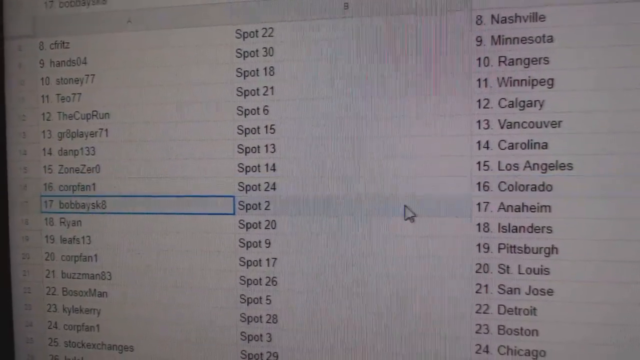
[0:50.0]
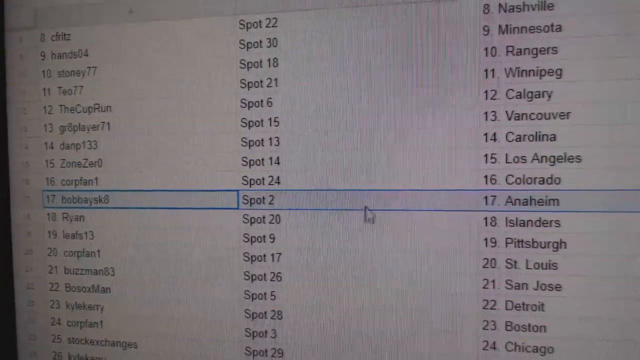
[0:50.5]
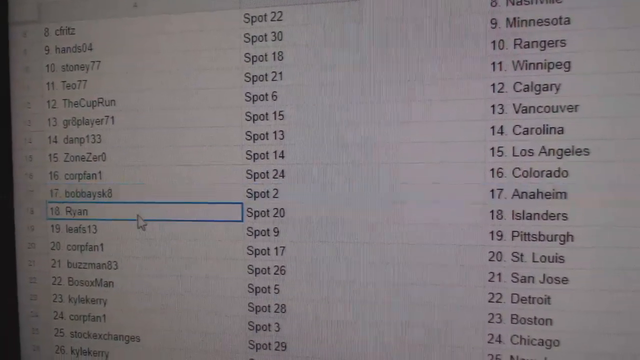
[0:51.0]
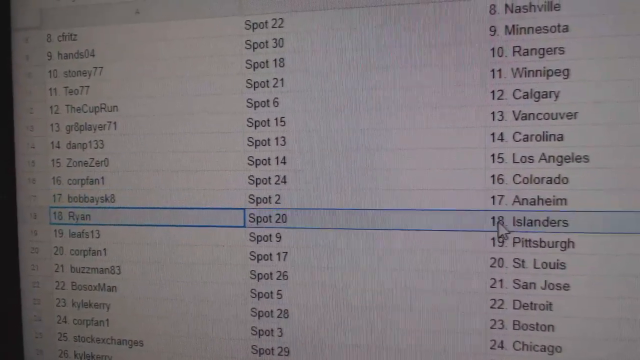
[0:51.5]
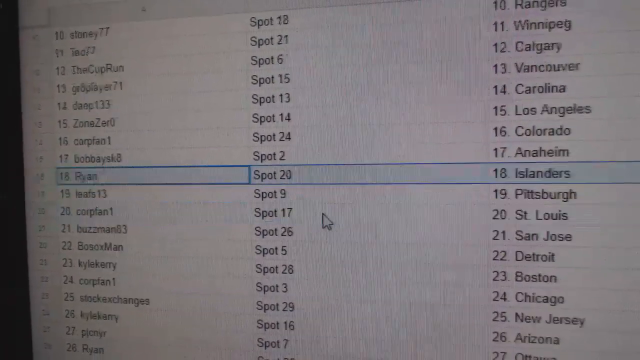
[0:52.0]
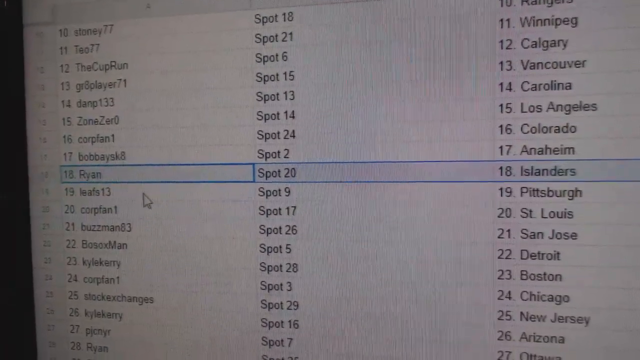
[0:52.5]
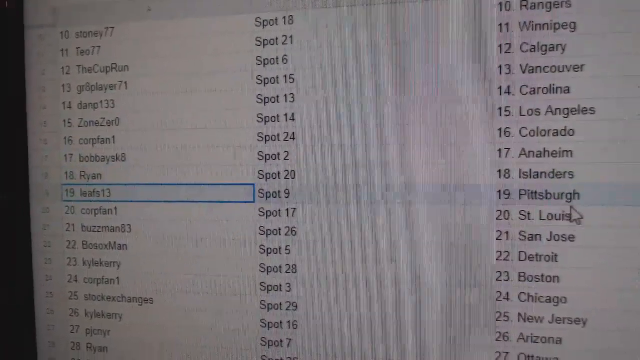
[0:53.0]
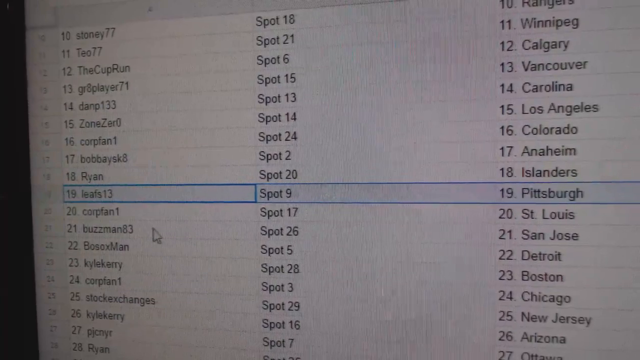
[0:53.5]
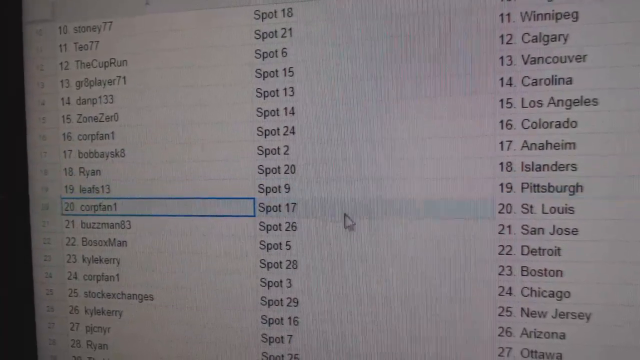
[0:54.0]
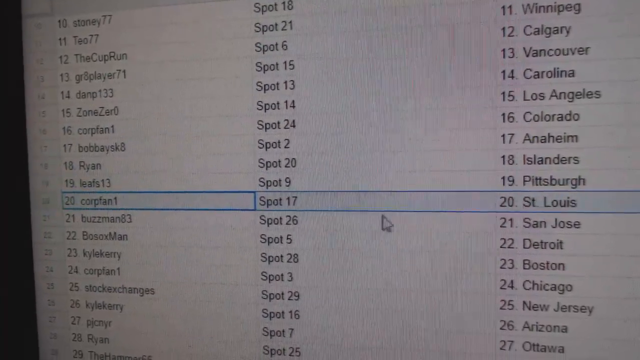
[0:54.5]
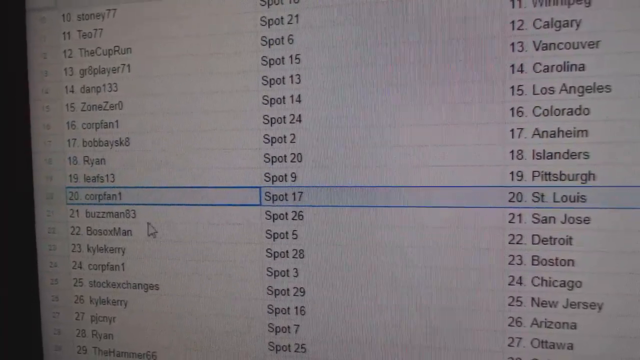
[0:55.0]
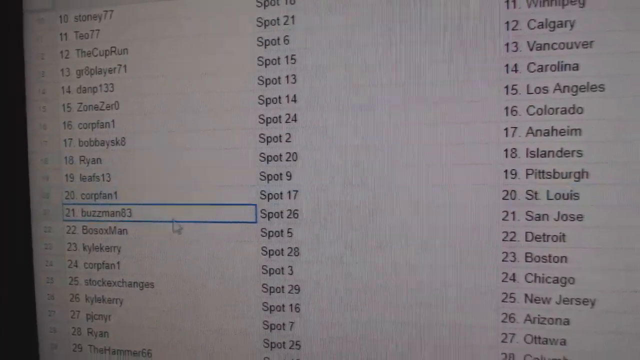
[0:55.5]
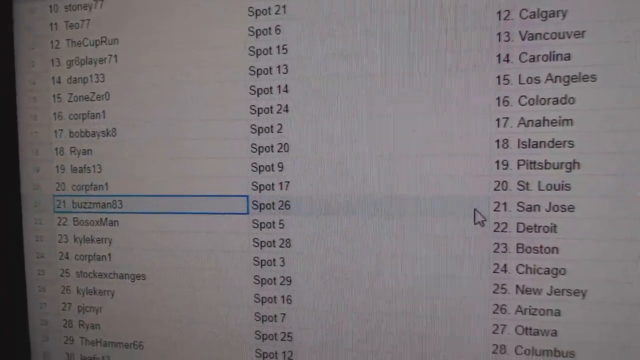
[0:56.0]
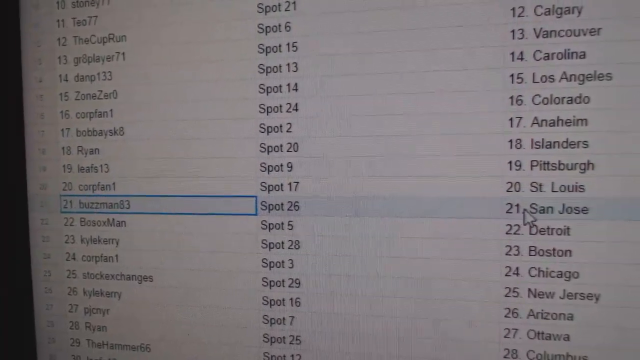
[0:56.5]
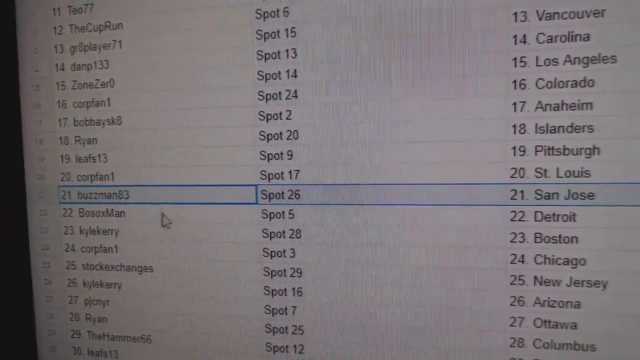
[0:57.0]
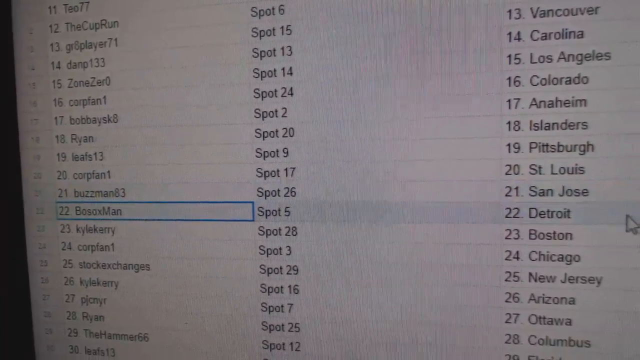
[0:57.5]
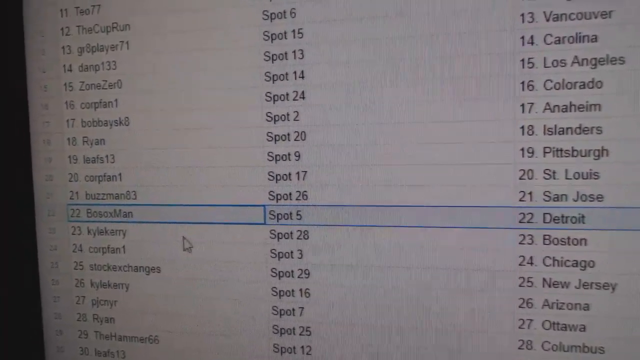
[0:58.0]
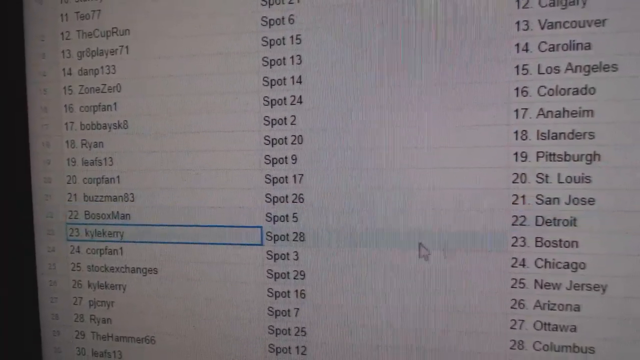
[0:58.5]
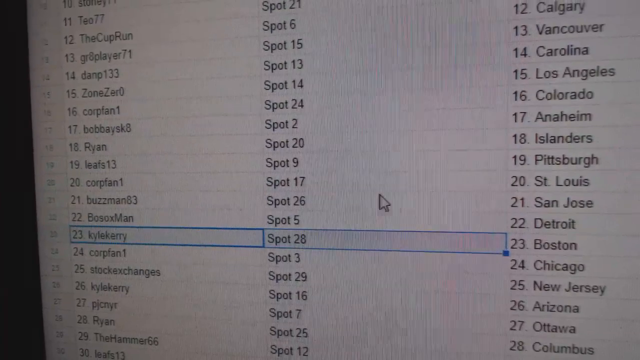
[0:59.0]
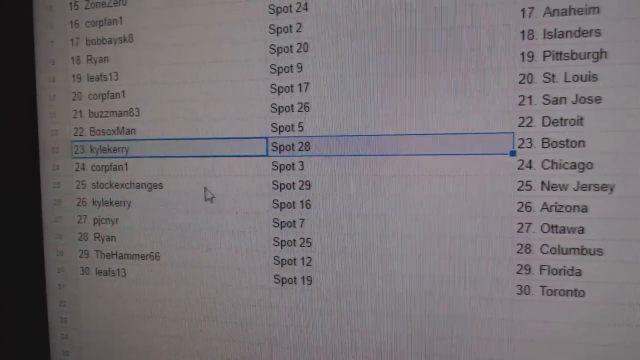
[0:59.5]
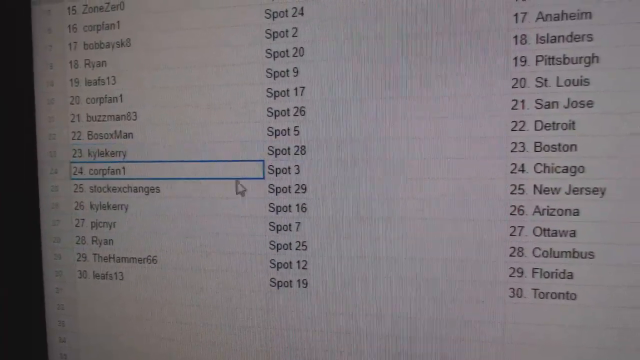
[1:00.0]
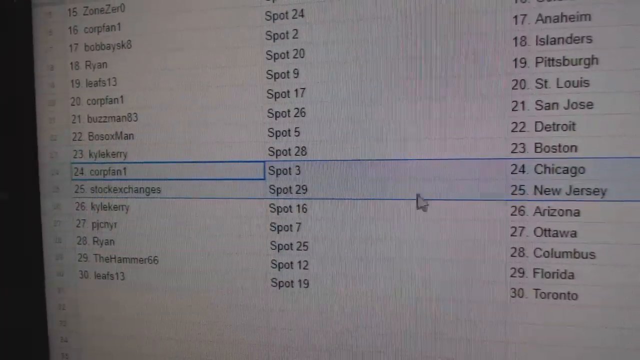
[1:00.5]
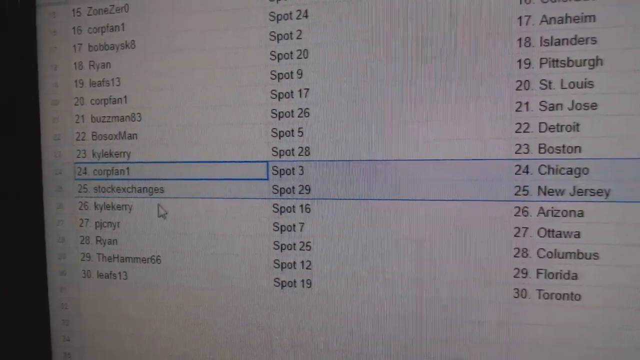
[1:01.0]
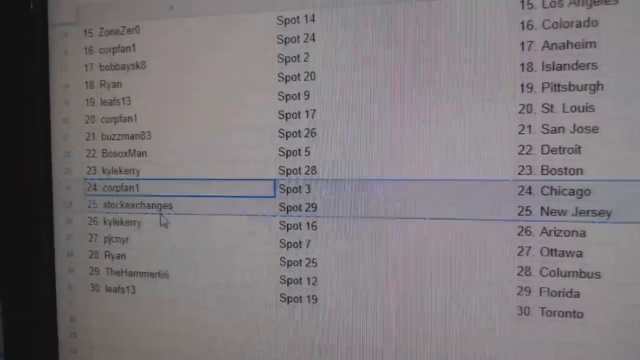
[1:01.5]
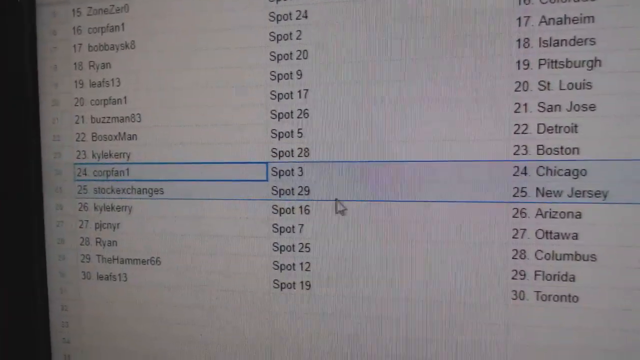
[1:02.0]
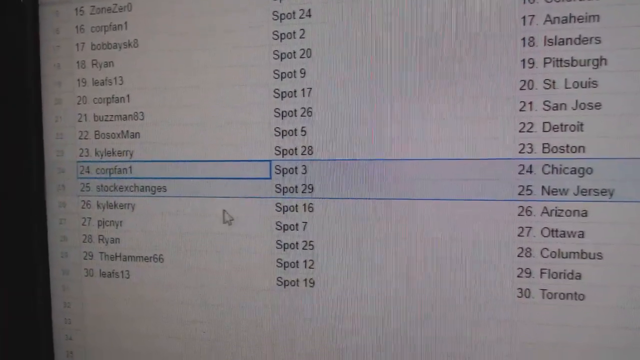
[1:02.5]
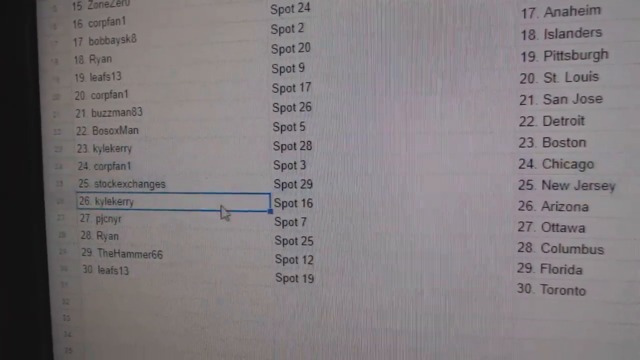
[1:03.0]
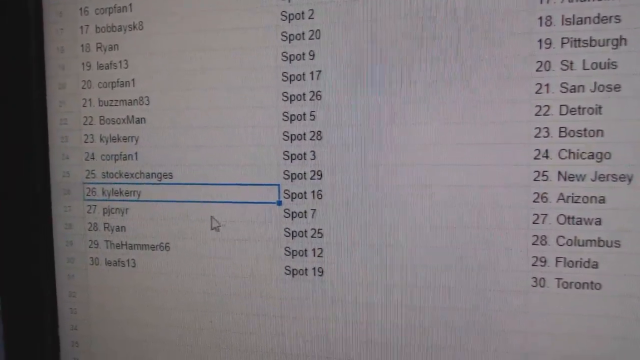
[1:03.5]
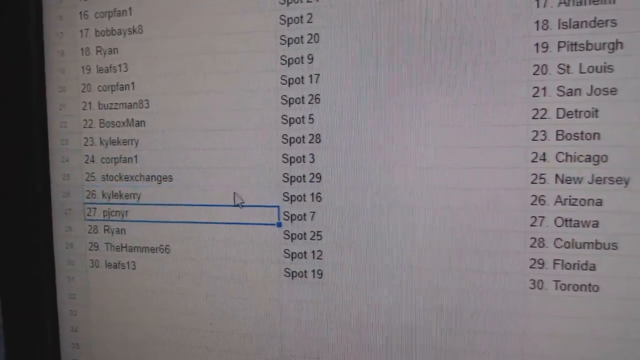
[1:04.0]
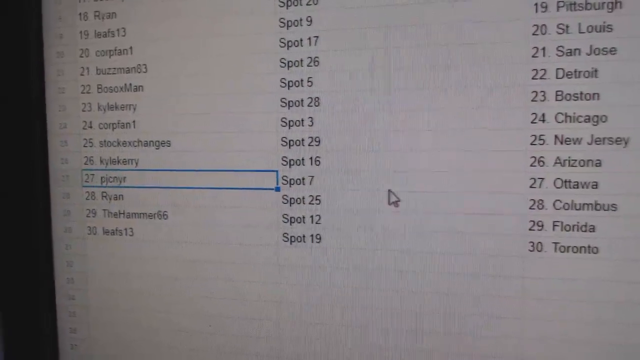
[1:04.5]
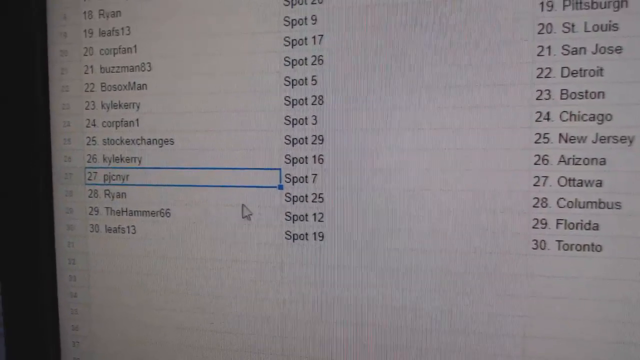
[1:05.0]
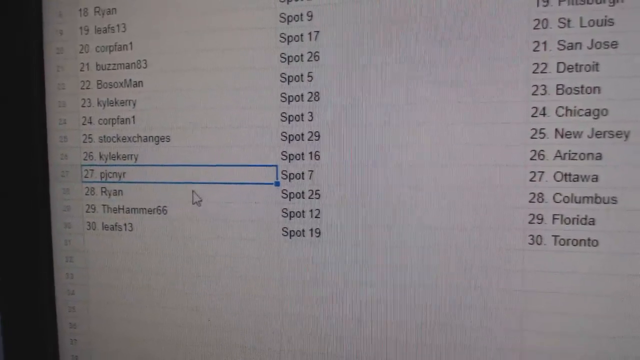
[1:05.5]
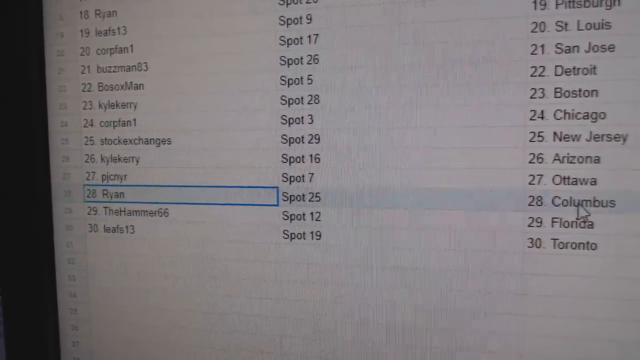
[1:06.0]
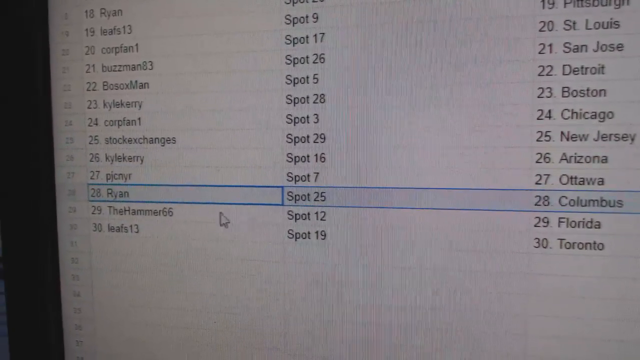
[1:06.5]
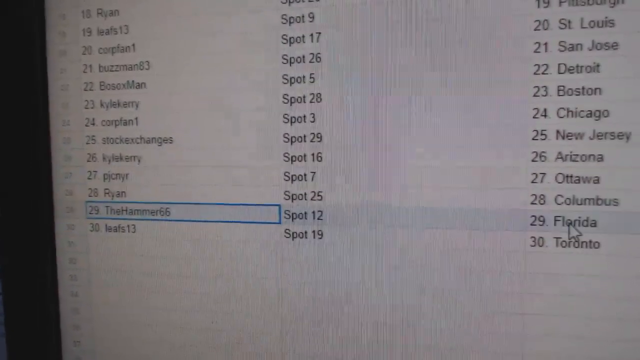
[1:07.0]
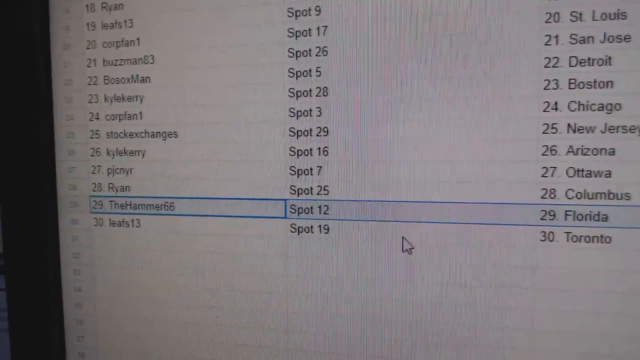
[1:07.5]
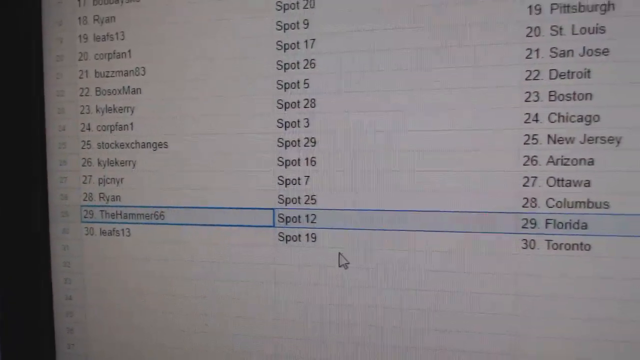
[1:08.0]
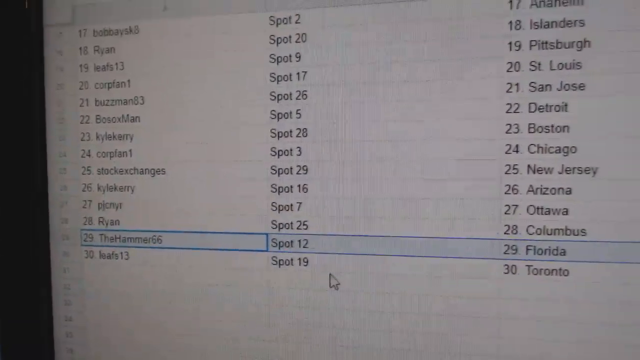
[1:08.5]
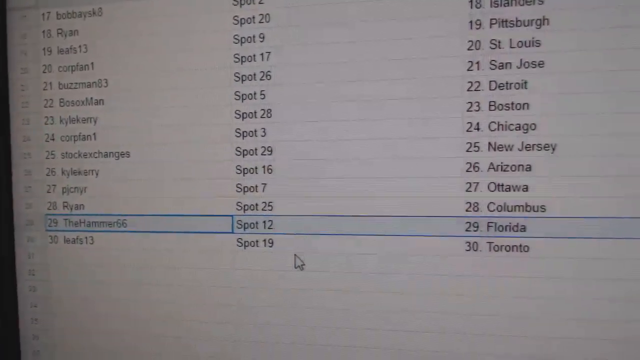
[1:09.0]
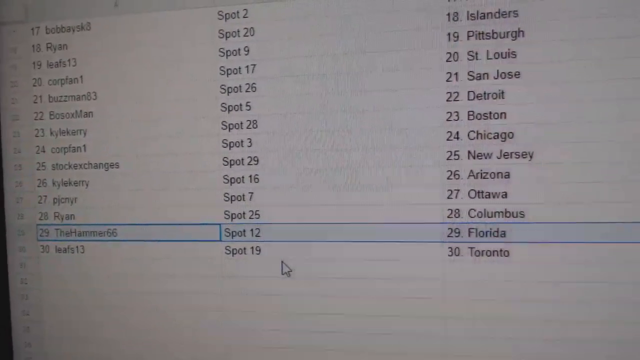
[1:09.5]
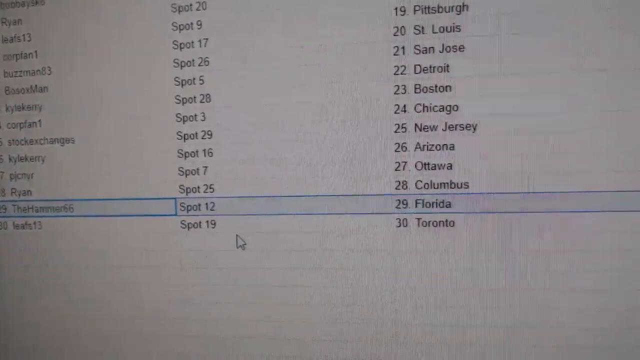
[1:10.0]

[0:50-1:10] With everything done, the whole worksheet is highlighted, showing three columns with entries such as number 23, the name, the spot, the date and the town. All the numbers, the names of the cities and the spot numbers are in the columns, with the spot numbers in the middle column; the first column apparently holds the name, followed by the numbers. Each row corresponds to one entry.